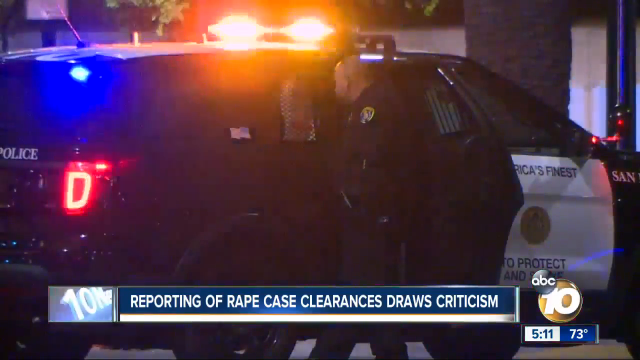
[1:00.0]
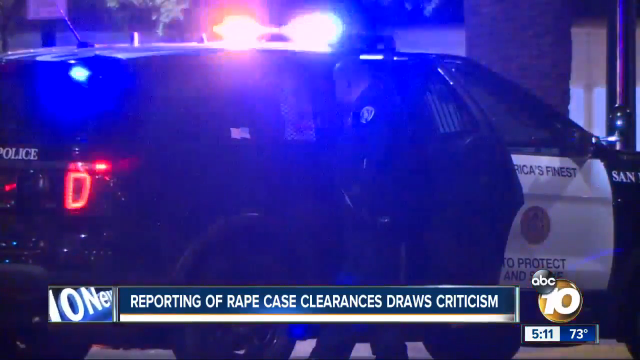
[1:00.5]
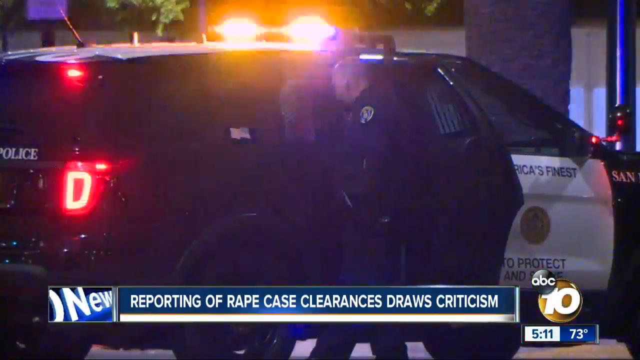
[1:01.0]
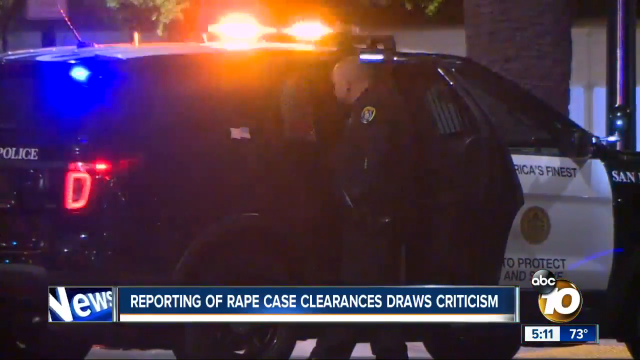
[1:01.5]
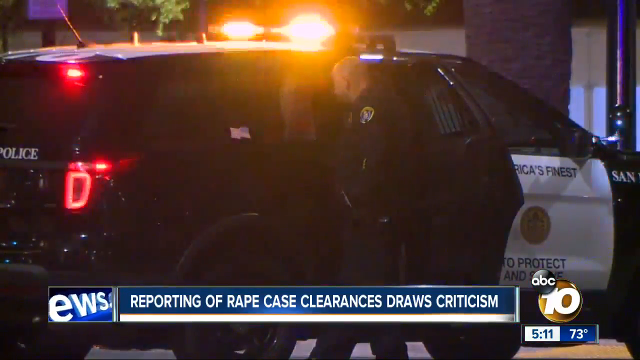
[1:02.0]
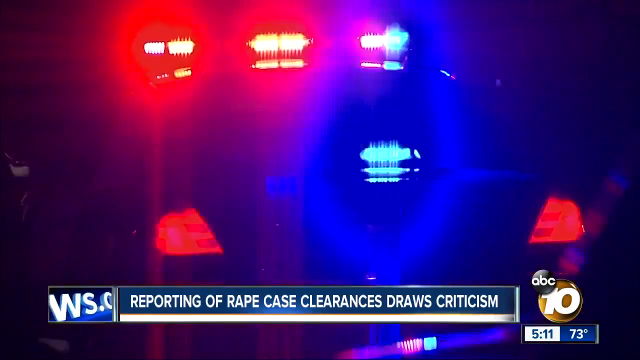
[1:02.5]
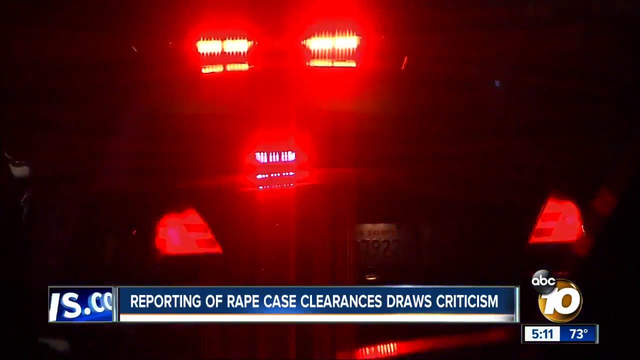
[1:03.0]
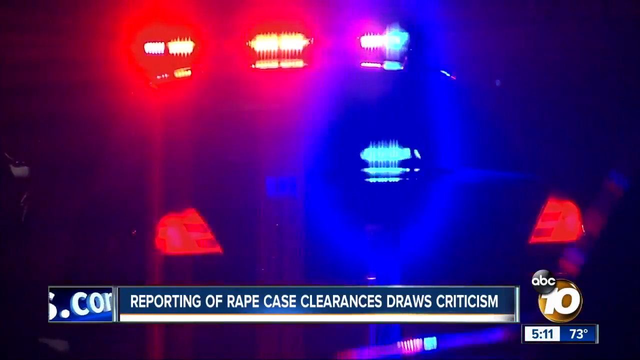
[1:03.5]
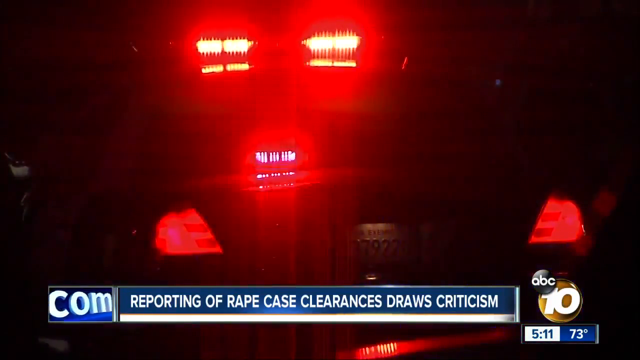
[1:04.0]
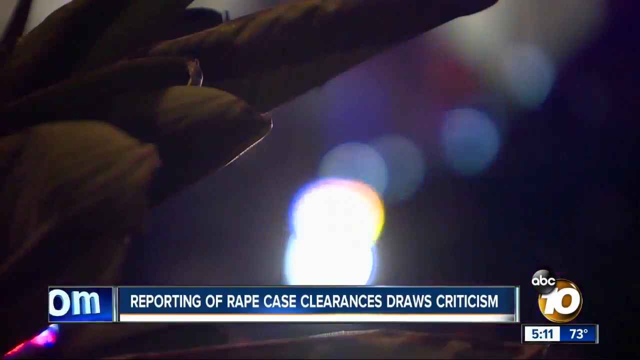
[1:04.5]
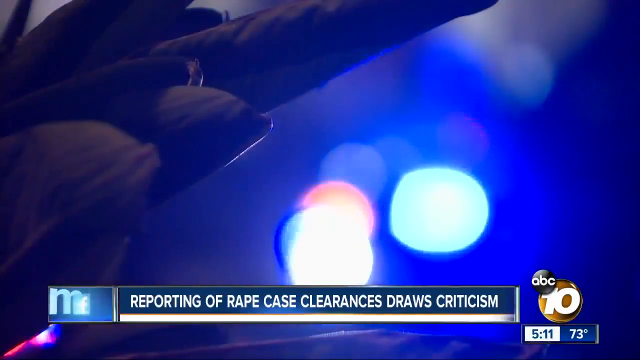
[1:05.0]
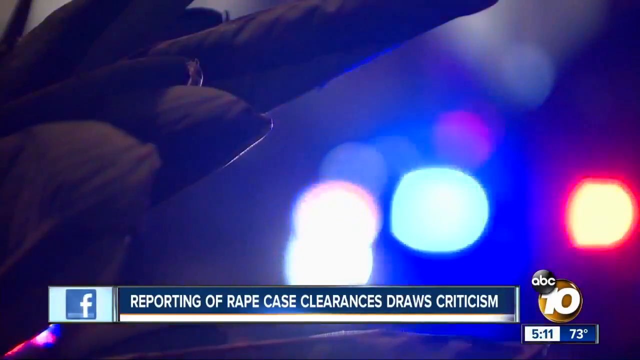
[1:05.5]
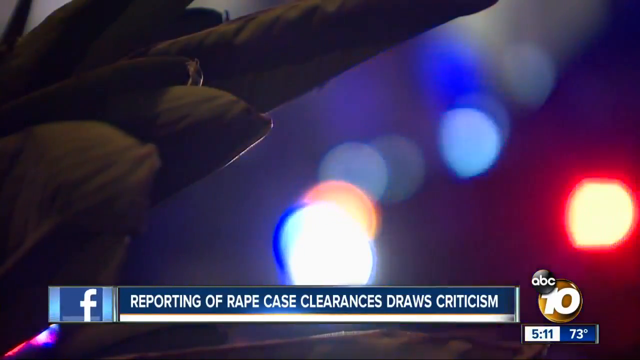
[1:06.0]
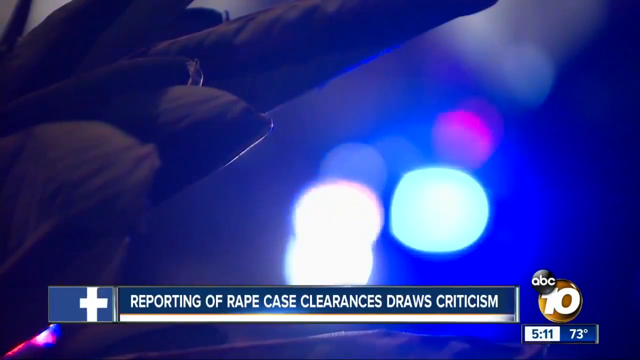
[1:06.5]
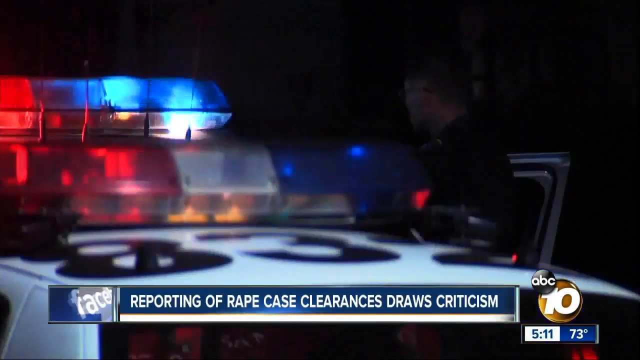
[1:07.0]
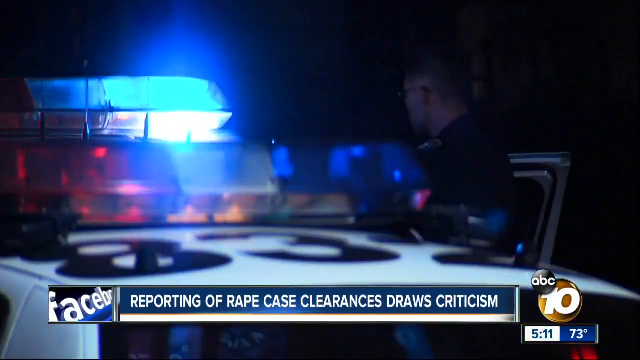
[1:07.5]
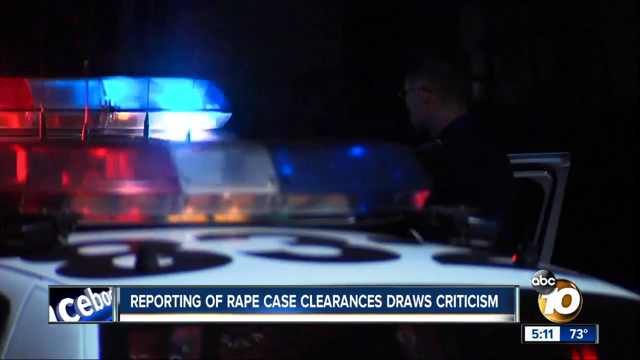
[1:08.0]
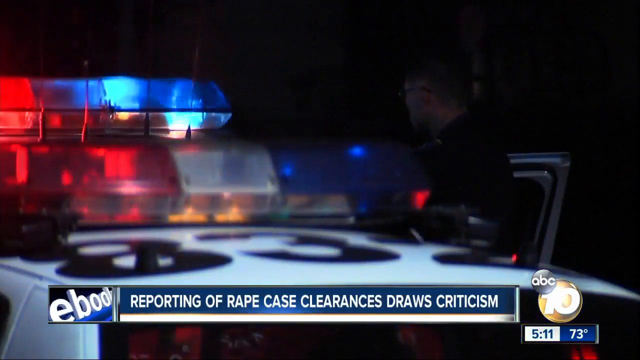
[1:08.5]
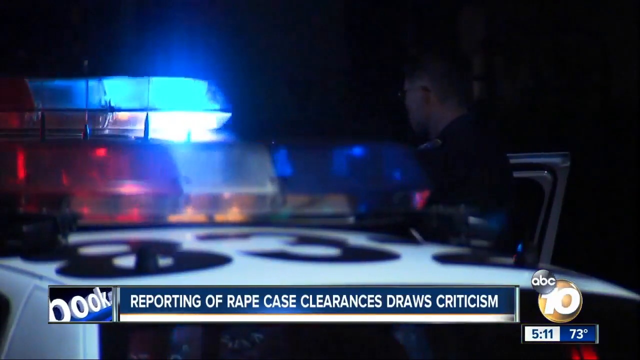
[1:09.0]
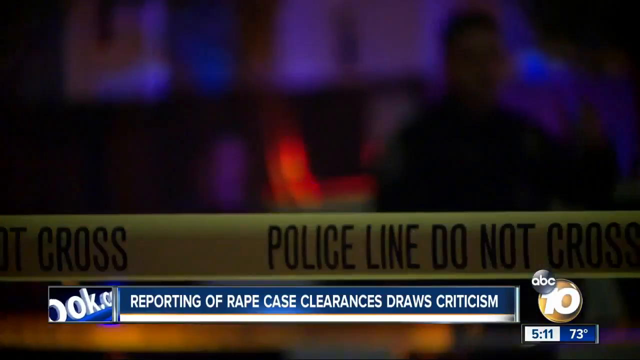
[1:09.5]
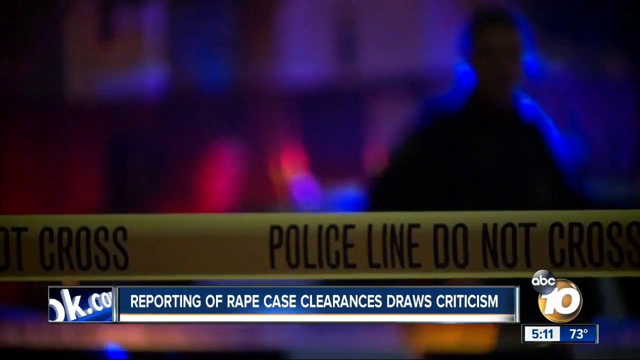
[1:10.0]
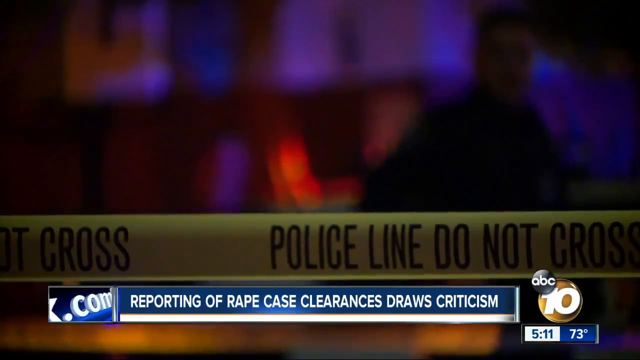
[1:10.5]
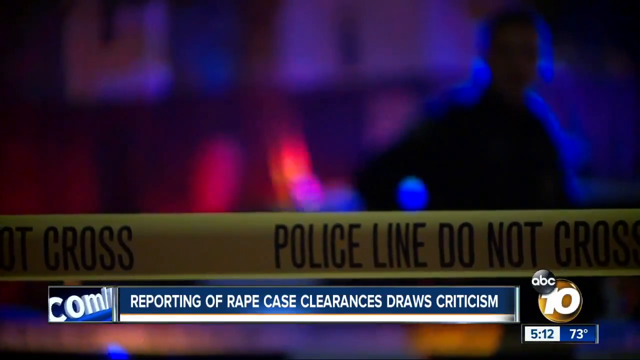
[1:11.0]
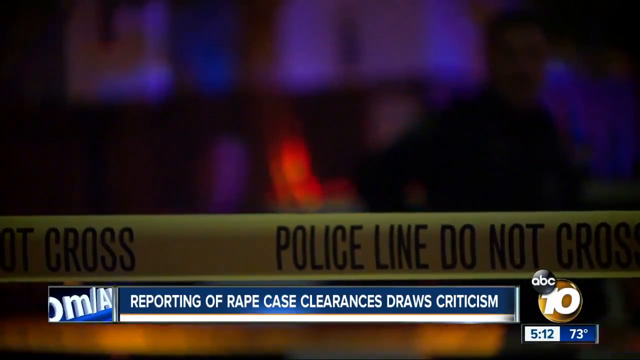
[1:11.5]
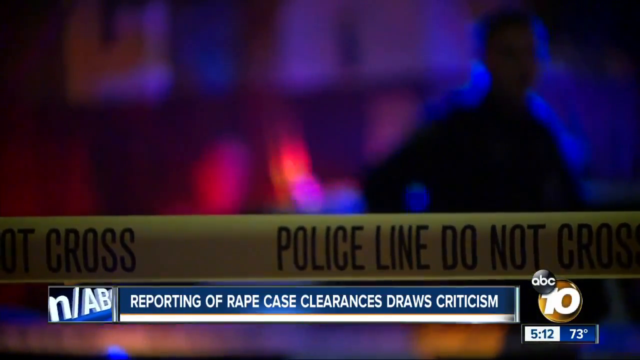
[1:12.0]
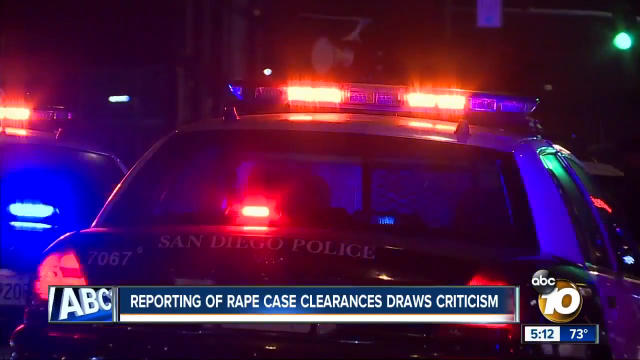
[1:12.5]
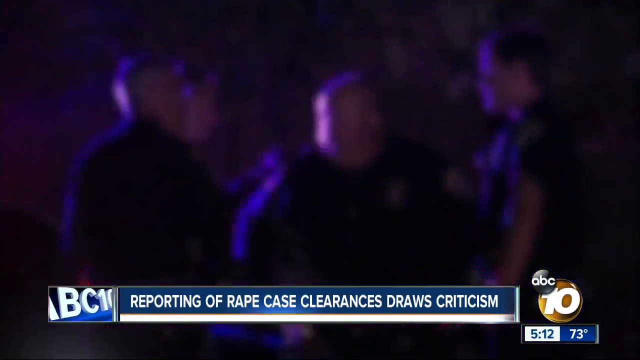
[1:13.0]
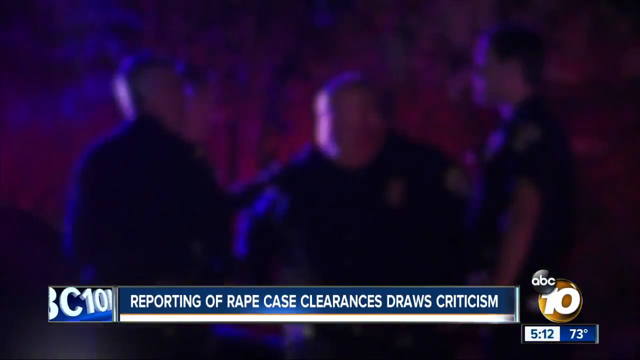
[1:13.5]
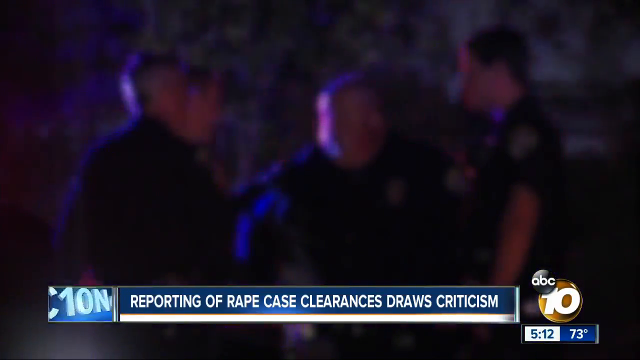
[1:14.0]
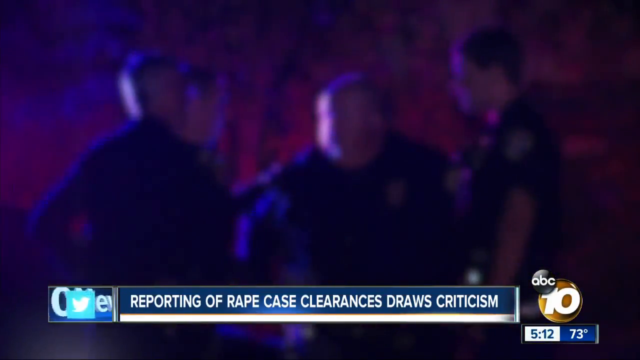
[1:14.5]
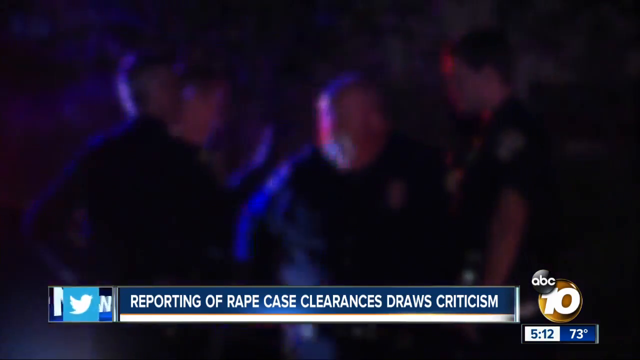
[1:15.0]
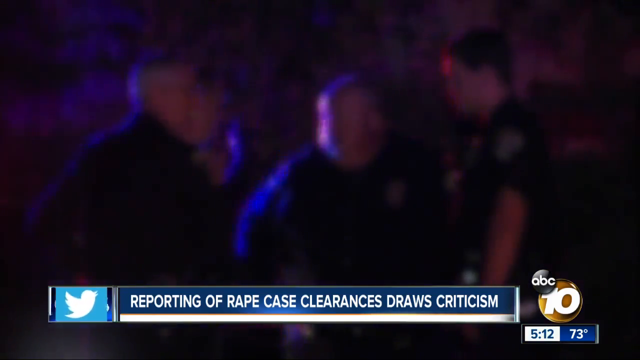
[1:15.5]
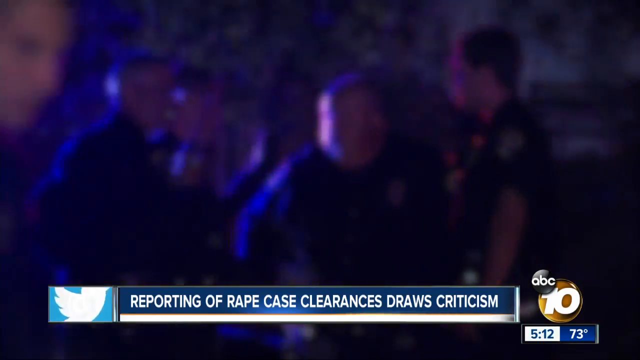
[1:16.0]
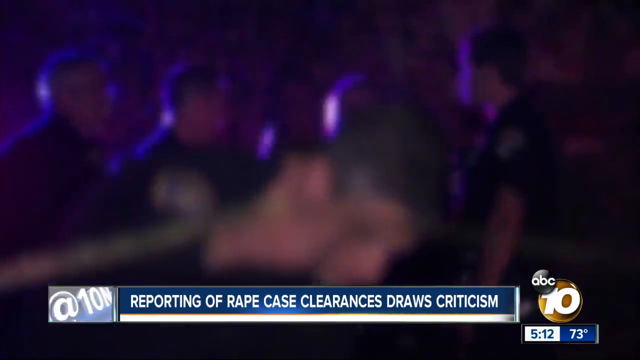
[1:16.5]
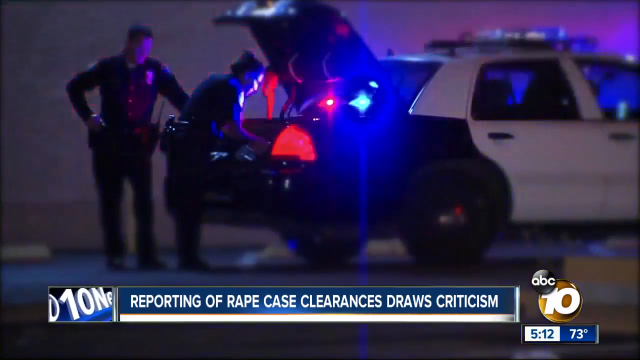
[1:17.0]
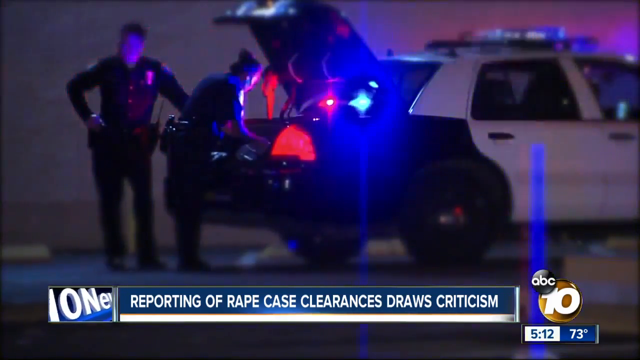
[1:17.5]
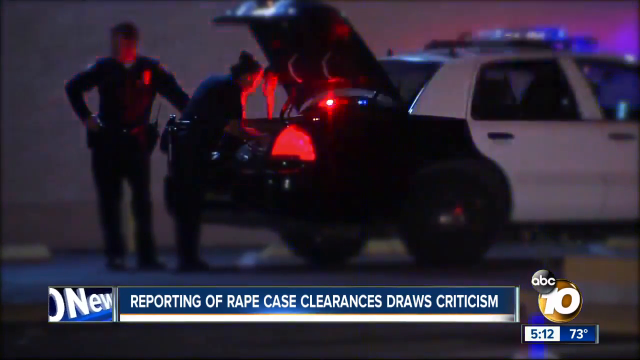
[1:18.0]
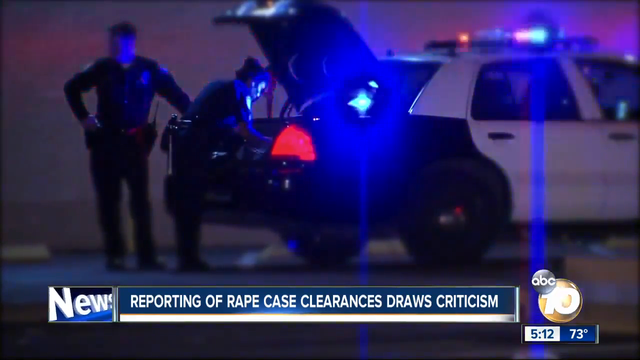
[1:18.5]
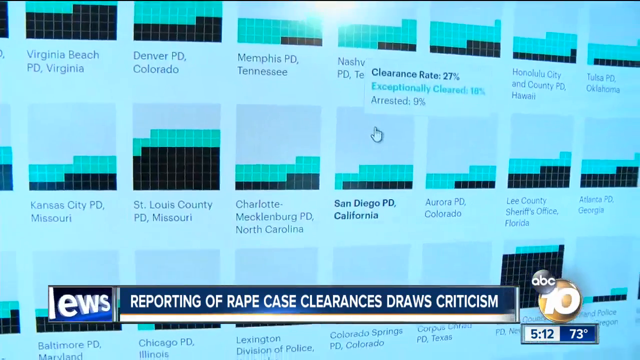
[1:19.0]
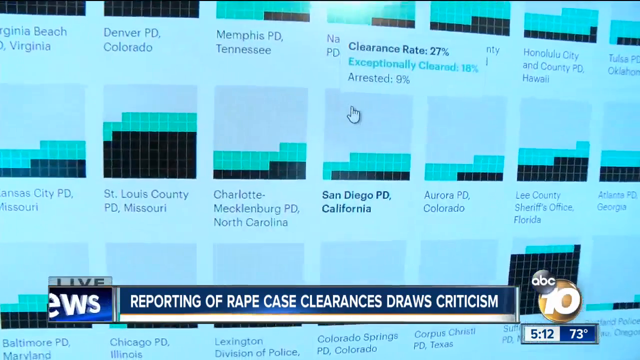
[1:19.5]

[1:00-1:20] Footage shows cars and police at a scene. Statistics then appear on clearance rates and arrests for the Denver Police Department in Colorado, the Memphis Police Department, and another department, showing a clearance rate of 27 percent and arrests at nine percent.